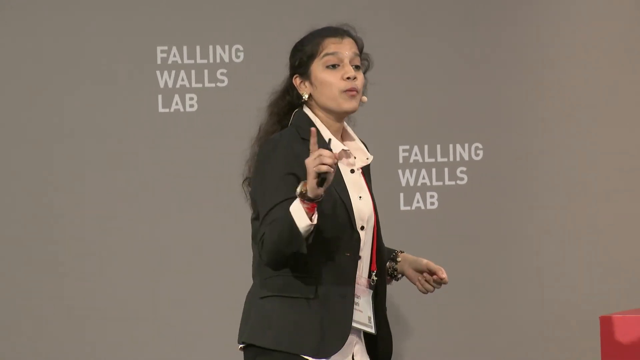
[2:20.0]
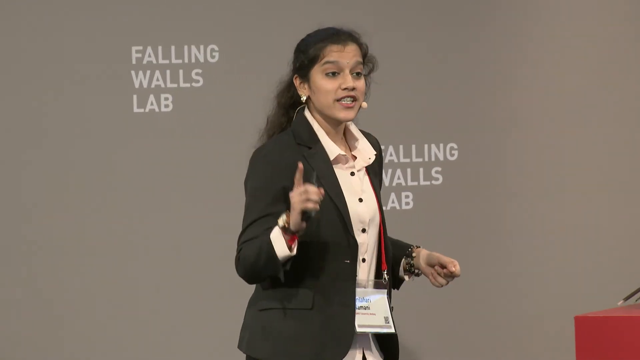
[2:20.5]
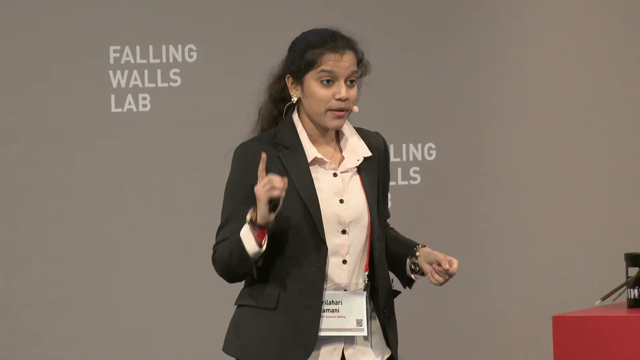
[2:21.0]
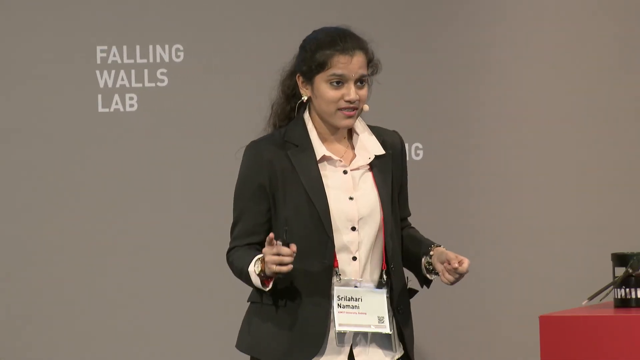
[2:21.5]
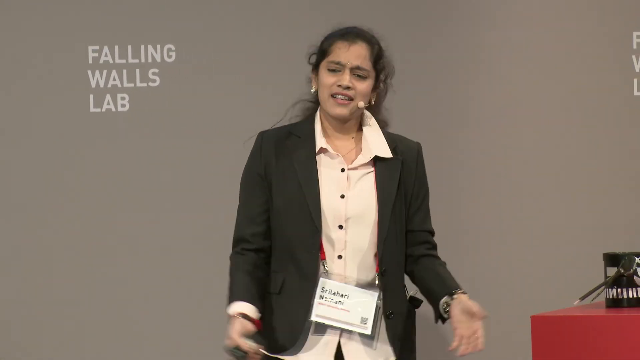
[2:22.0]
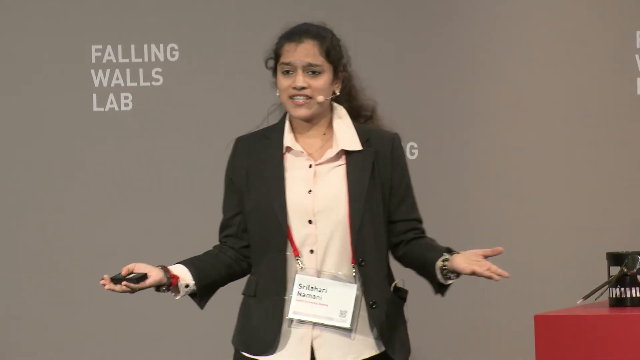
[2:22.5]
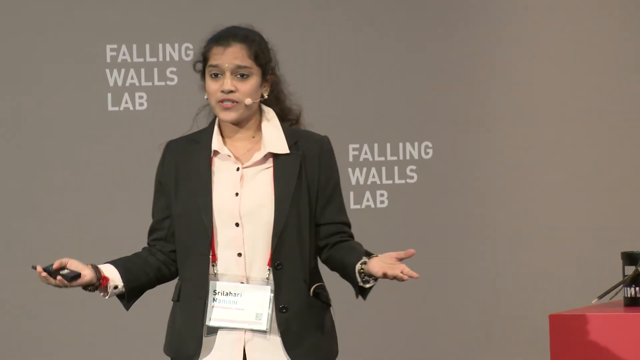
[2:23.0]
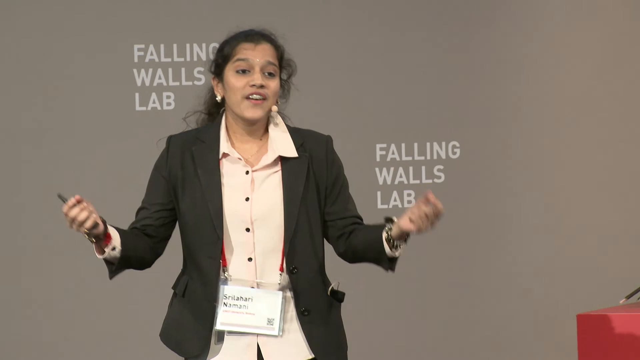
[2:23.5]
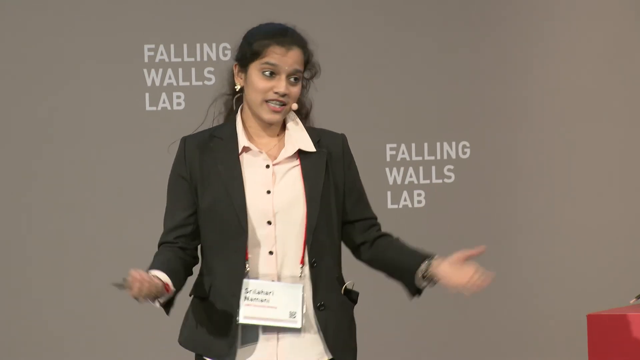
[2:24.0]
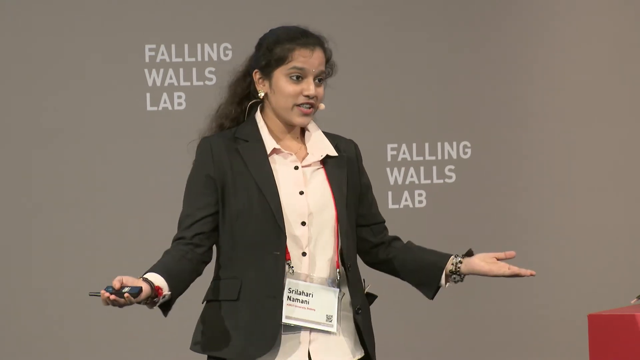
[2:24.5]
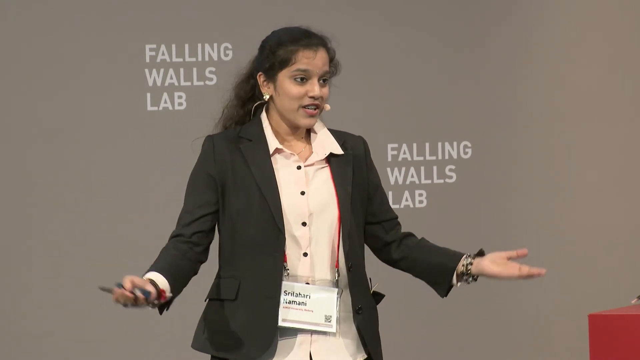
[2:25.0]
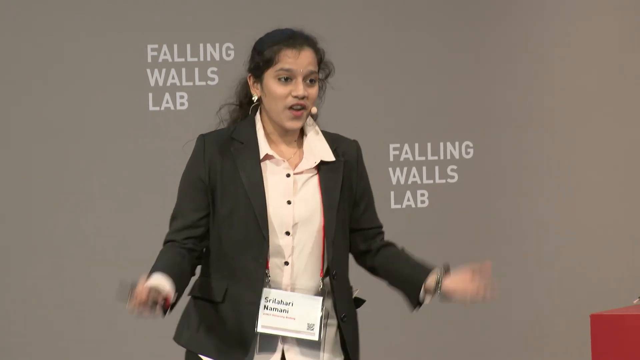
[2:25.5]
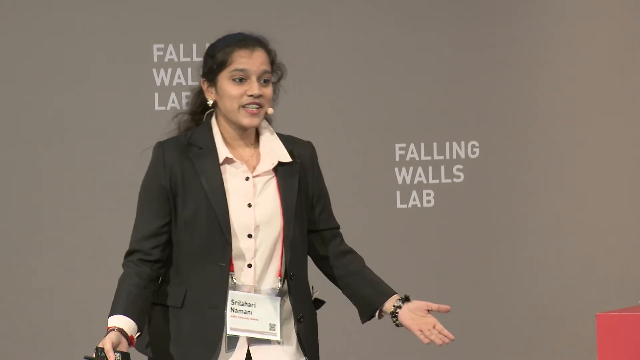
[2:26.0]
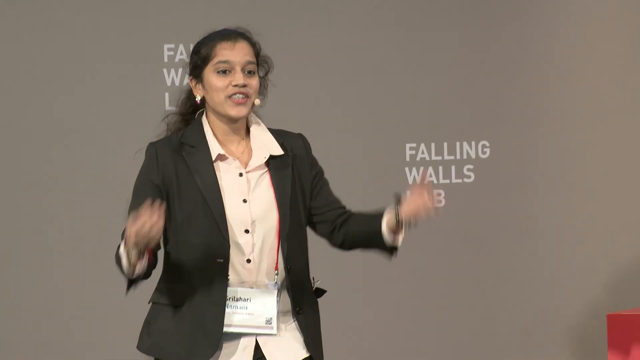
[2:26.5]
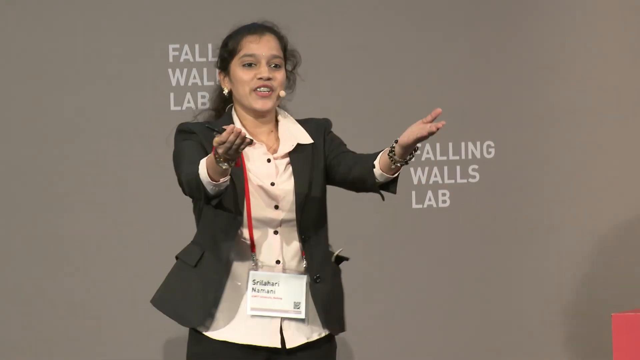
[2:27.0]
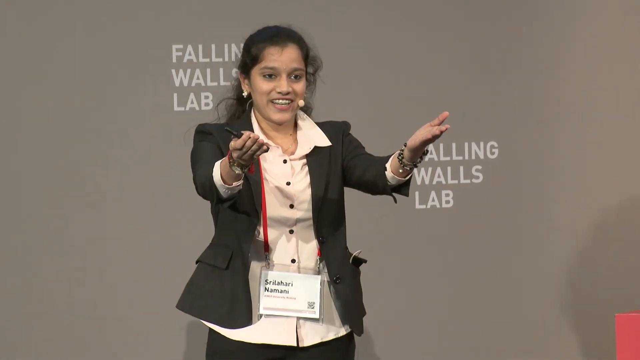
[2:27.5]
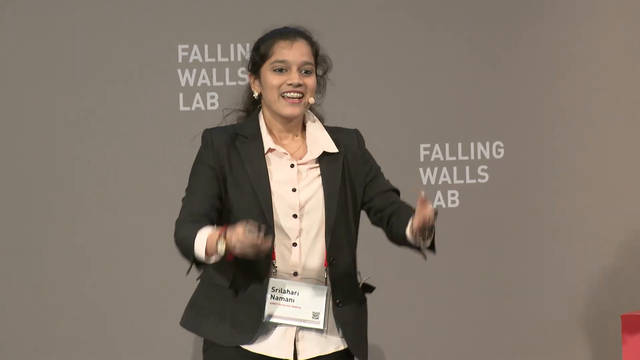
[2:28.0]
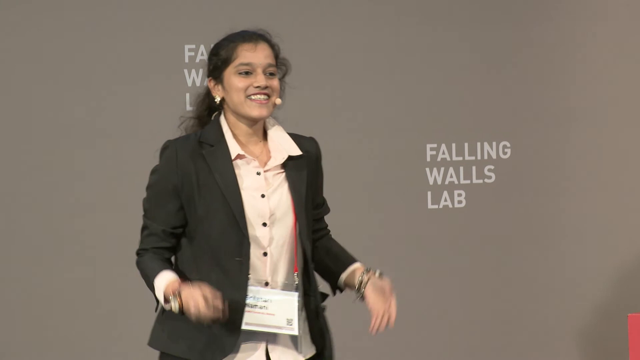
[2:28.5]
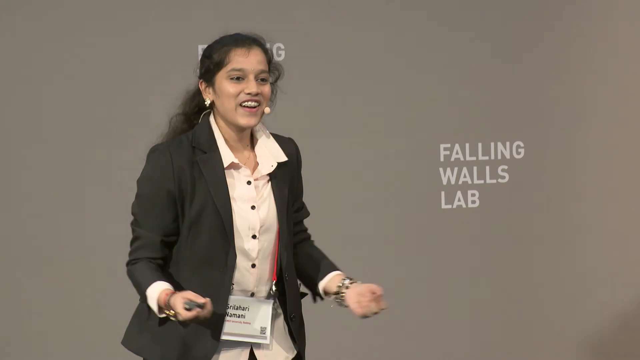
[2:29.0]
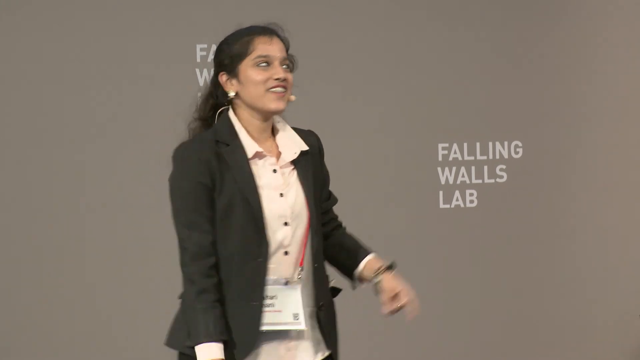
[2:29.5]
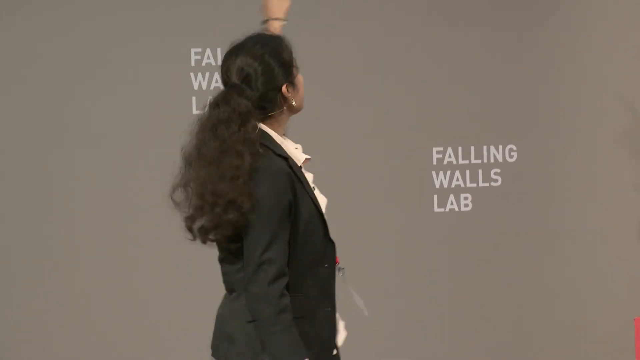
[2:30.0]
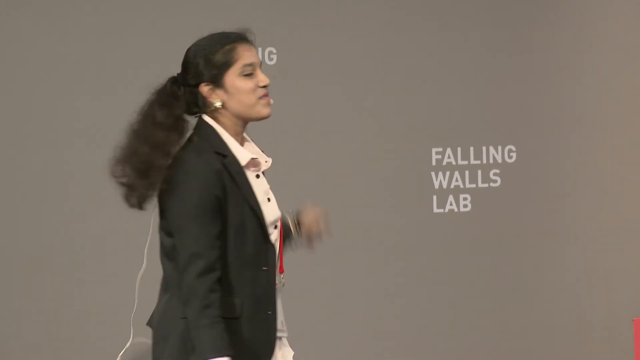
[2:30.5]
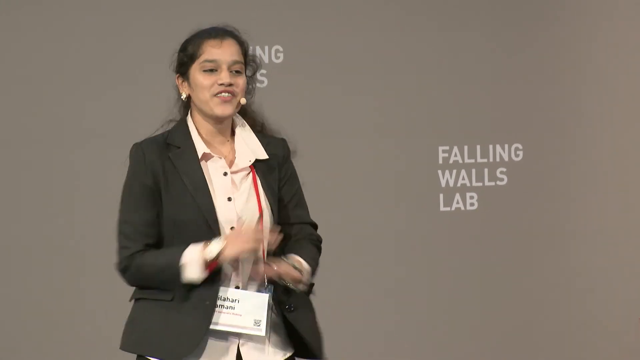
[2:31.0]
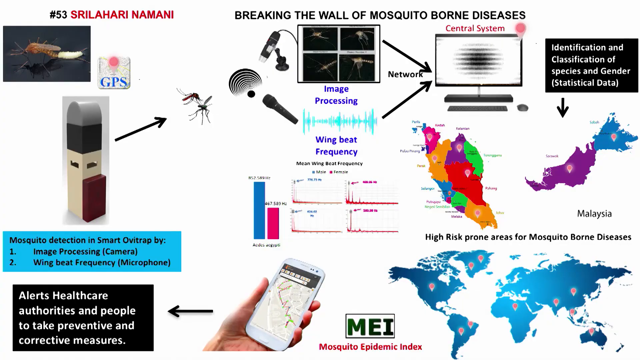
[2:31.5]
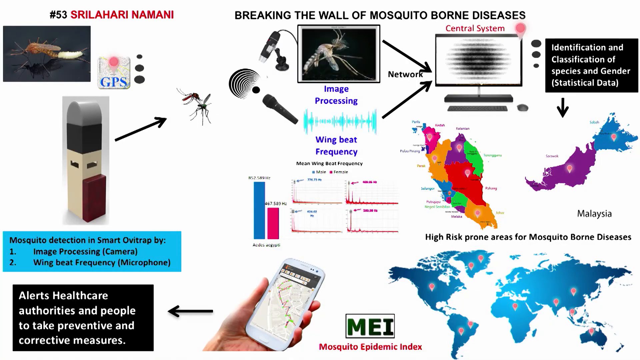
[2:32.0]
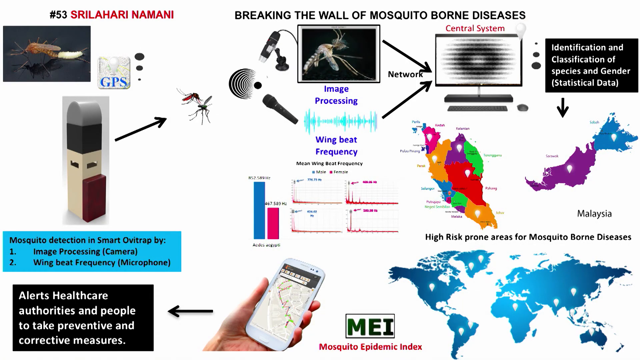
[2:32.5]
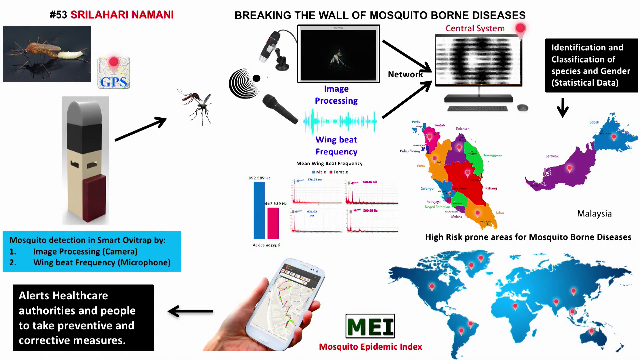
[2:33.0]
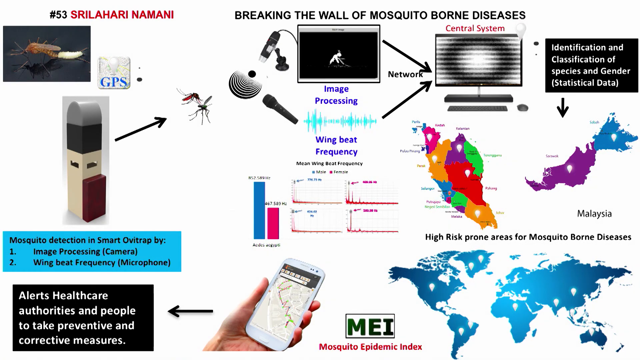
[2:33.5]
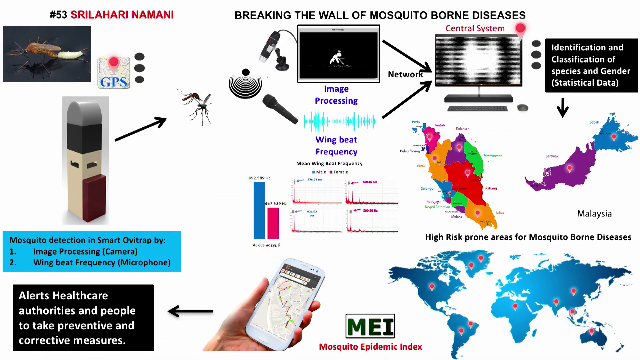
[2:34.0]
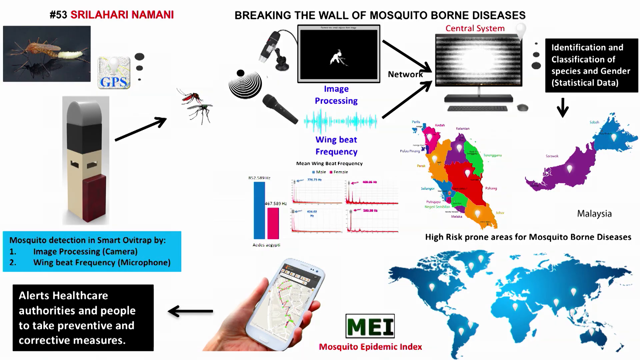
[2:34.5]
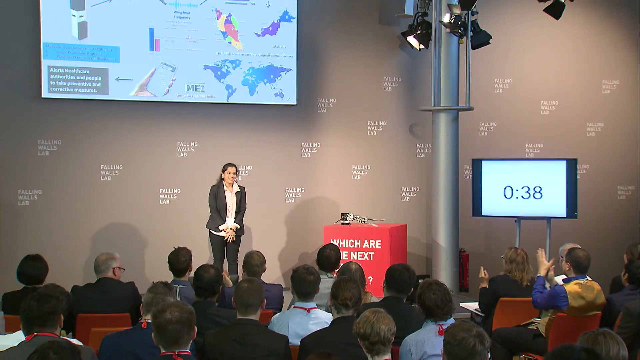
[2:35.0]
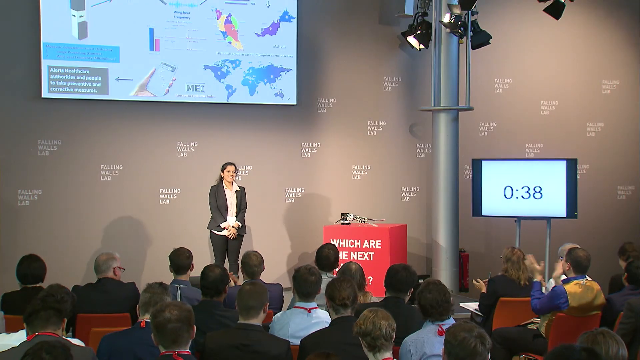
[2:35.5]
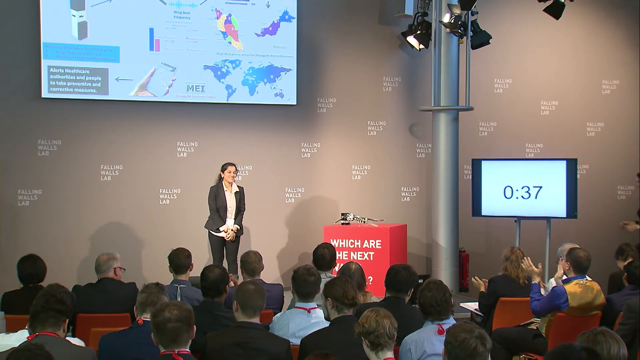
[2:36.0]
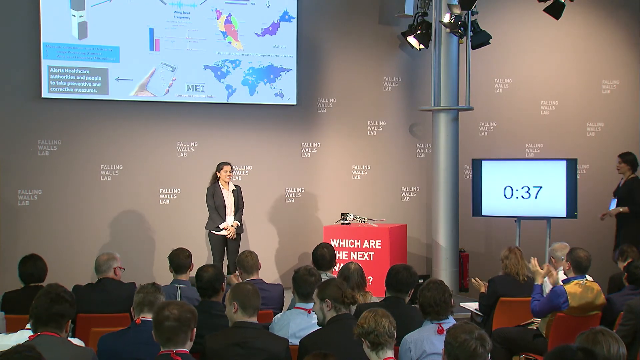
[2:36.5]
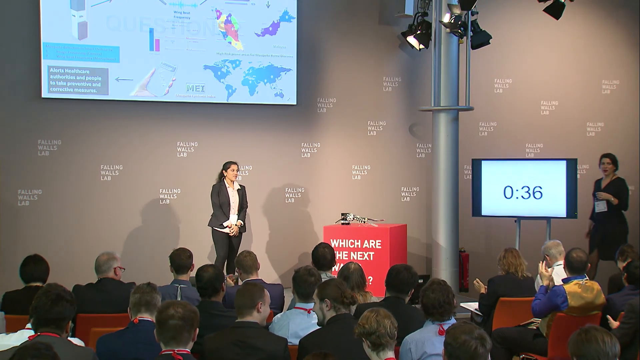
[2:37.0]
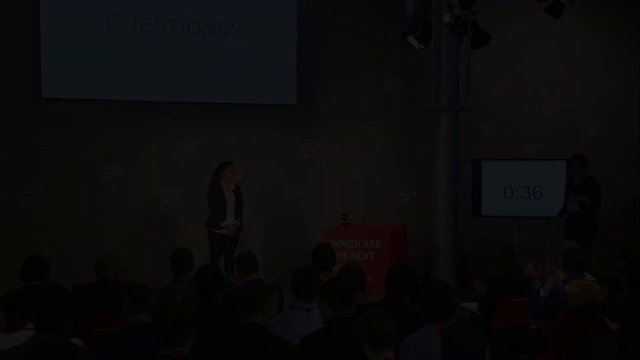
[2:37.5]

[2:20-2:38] The camera zooms in on her again as she speaks. She shakes her head a little, and something shiny is visible on her forehead. It may be a golden dot between her eyes, but more probably she is sweating on stage. The video cuts back to the presentation, which still shows the world map of high-risk areas for mosquito-borne diseases at the bottom right. One dot is in America, almost central northern America. Two dots are in South America and two in Greenland. Others are in parts of Asia, one close to China and one that looks more like India, and there is definitely one in Africa. The slide also shows that the device alerts health care authorities. People applaud, and another woman with a name tag steps onto the stage.